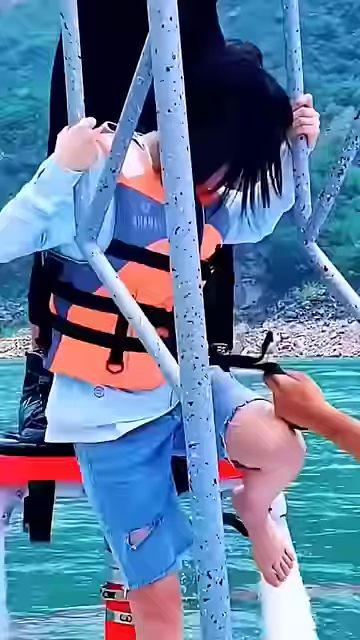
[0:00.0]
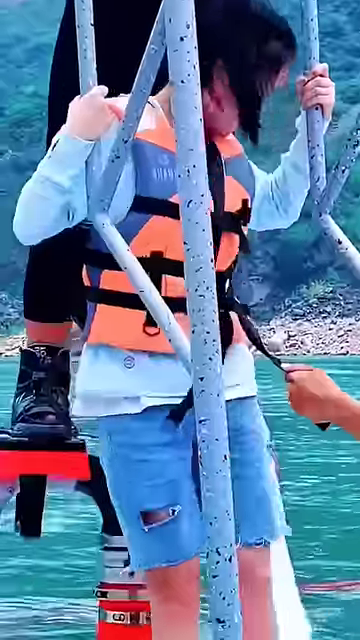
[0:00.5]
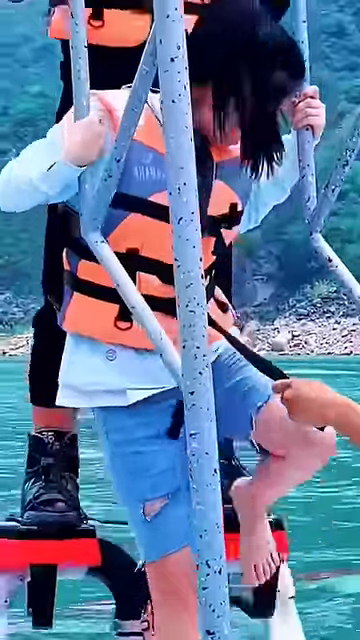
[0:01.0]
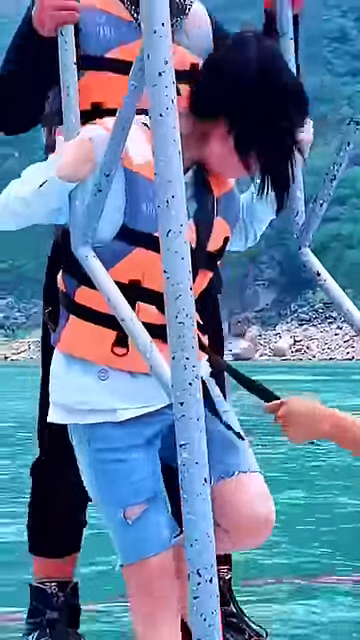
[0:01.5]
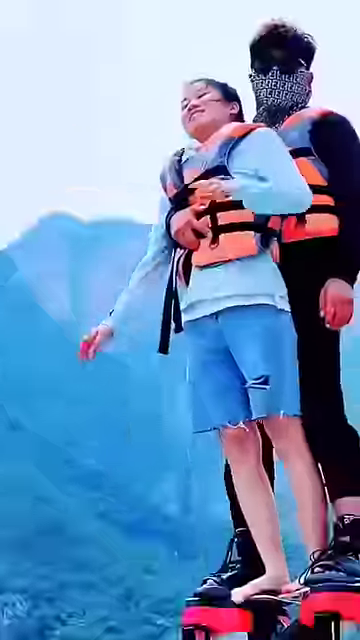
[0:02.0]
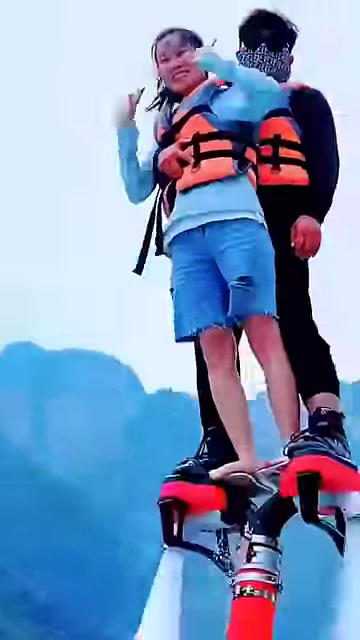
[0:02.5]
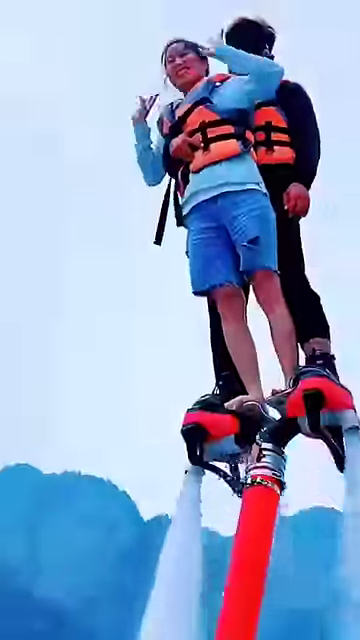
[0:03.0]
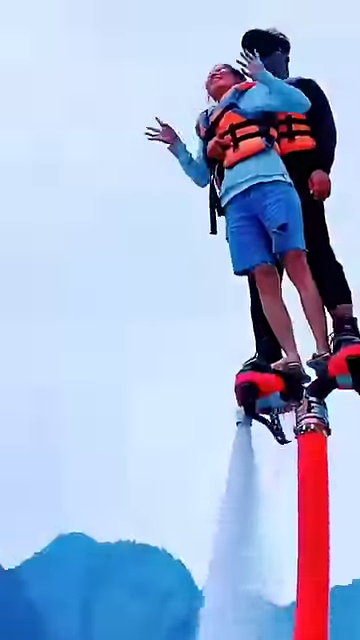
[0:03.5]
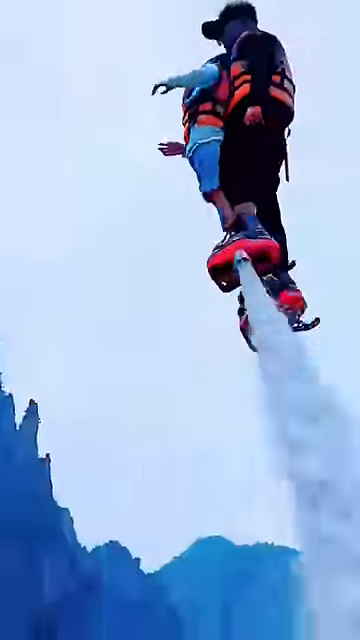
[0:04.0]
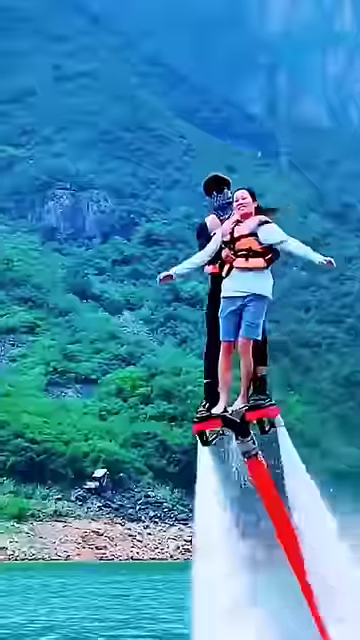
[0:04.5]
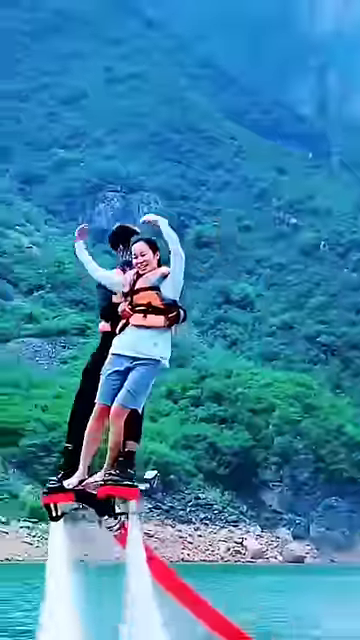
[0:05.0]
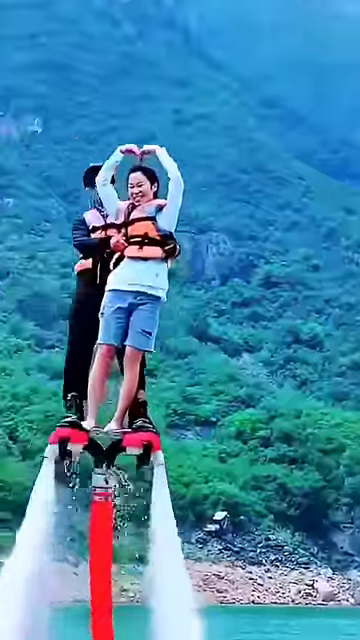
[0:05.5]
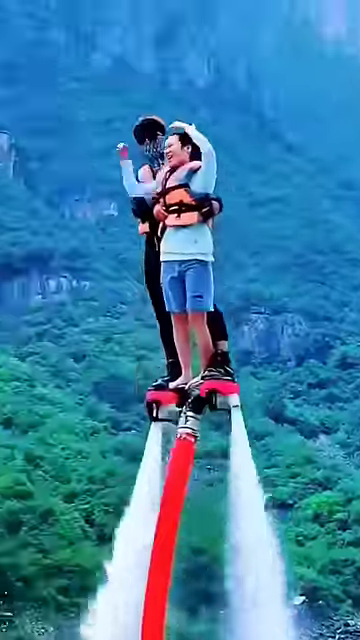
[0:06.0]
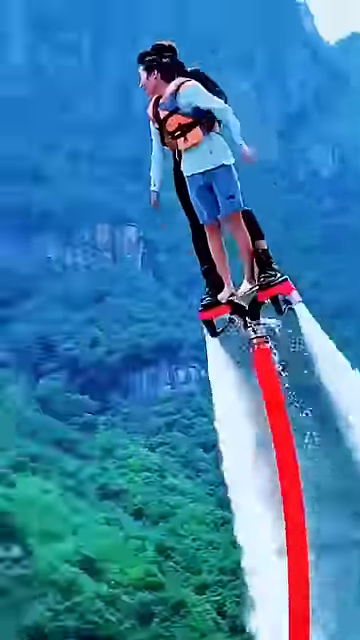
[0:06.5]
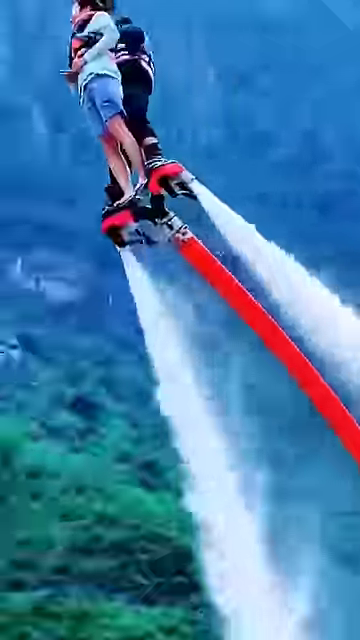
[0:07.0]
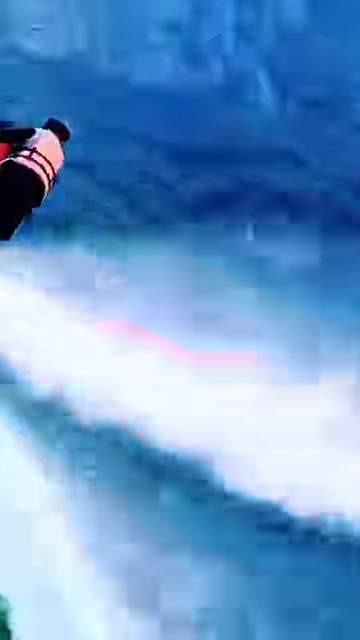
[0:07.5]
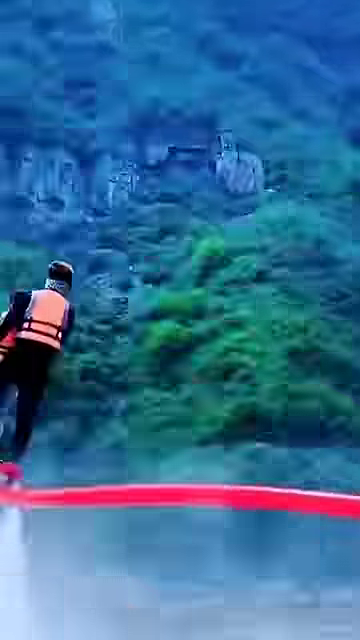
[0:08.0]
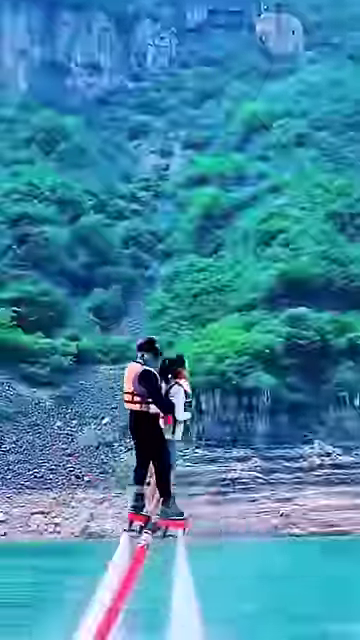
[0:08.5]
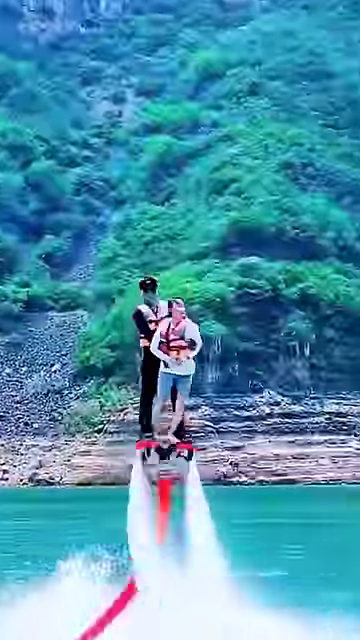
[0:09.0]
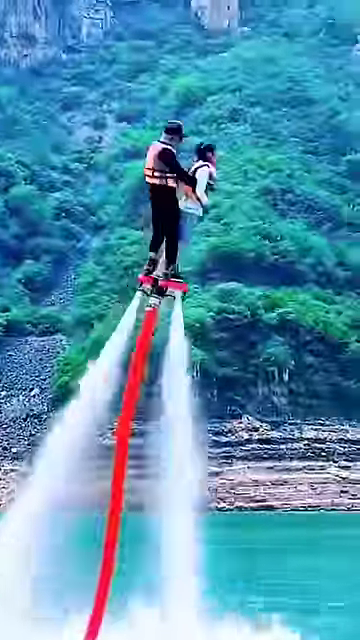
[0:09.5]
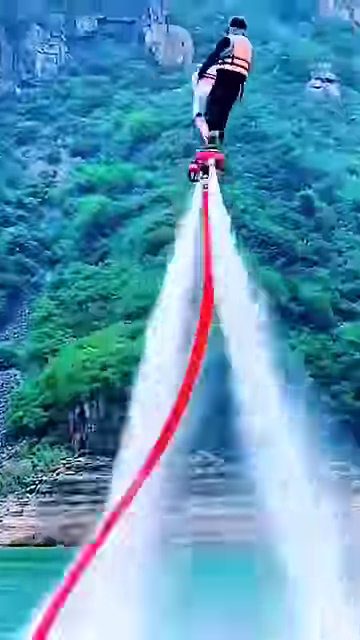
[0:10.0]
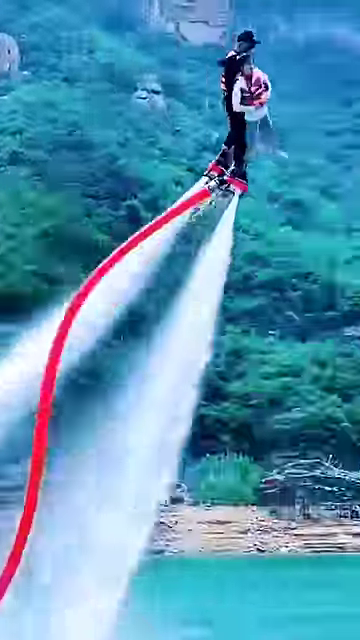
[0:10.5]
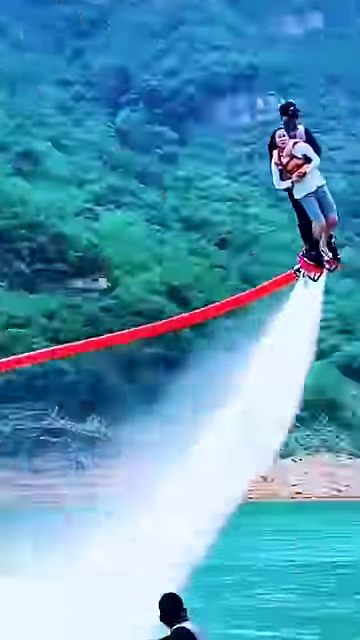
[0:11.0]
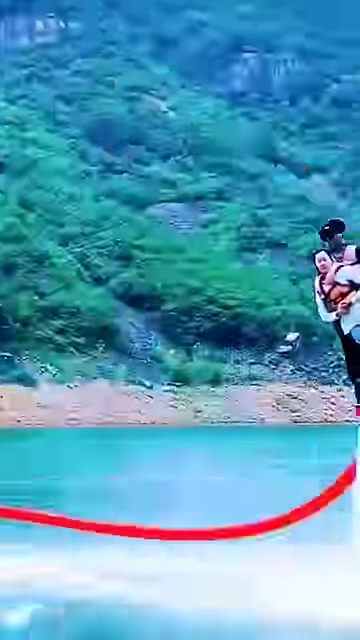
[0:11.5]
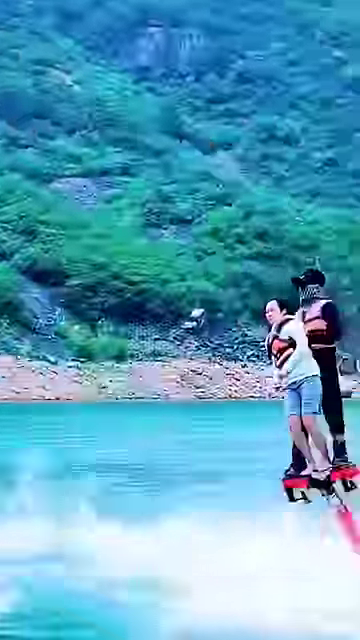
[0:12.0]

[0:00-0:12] Two people are on a water jet ride. One seems to be a professional wearing an orange vest, and the other seems to be a younger girl, maybe in her teenage years or early 20s. The professional holds the girl from behind as they are propelled into the air by two water jet propulsion devices hooked up to a long red hose. The devices float them in the air, perhaps about 30 to 50 feet up, and spin them. At the beginning, the girl makes a heart sign with her arms; she looks rather happy and not scared. The professional wears headgear, a helmet or a scarf, and sunglasses around the face, so their facial expression cannot be seen, and he holds on to her to make sure she does not fall as they spin. Overall, the girl seems happy to be on the ride. They go around in the air for about 10 seconds and then sink into the water.